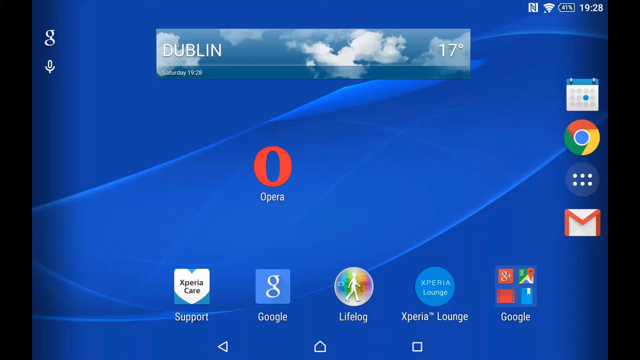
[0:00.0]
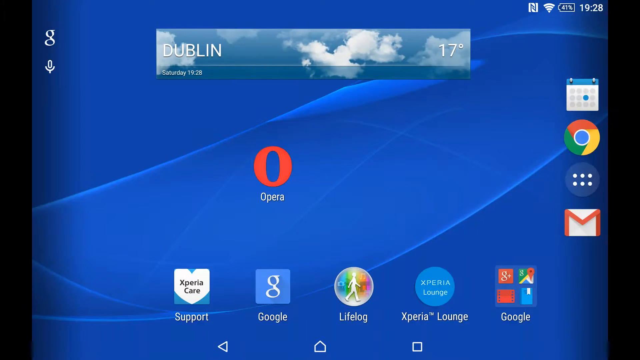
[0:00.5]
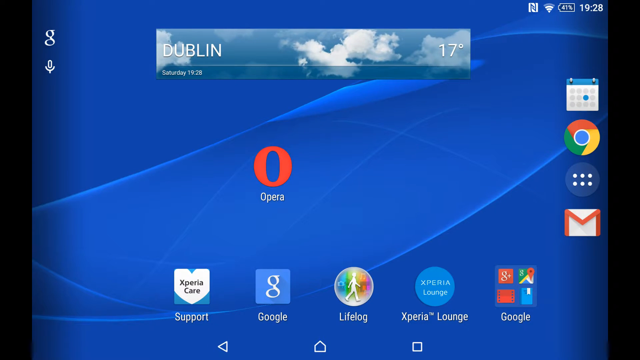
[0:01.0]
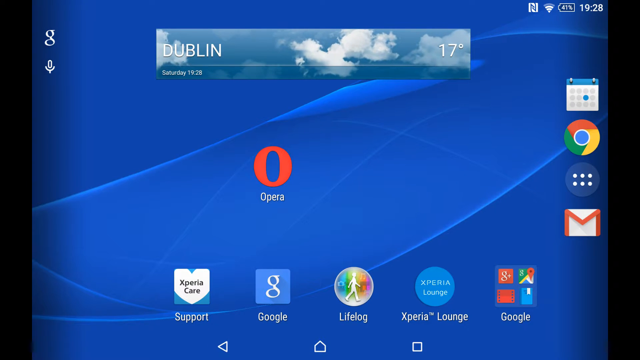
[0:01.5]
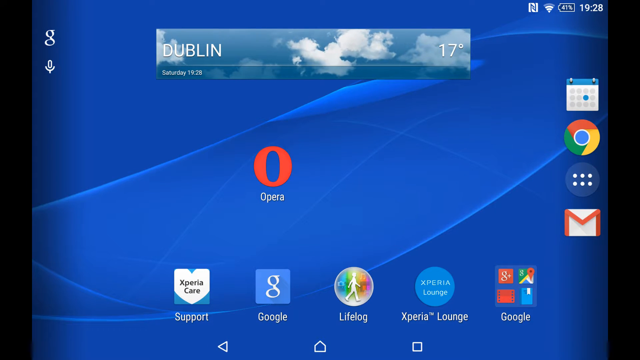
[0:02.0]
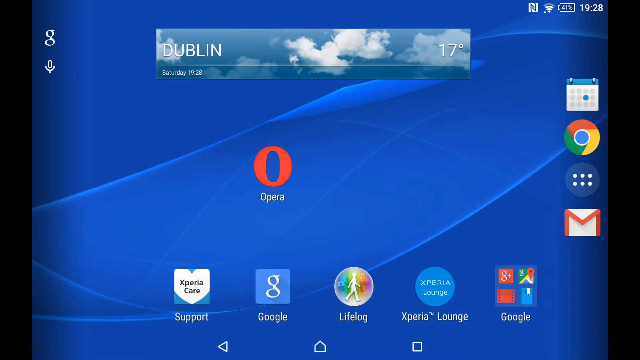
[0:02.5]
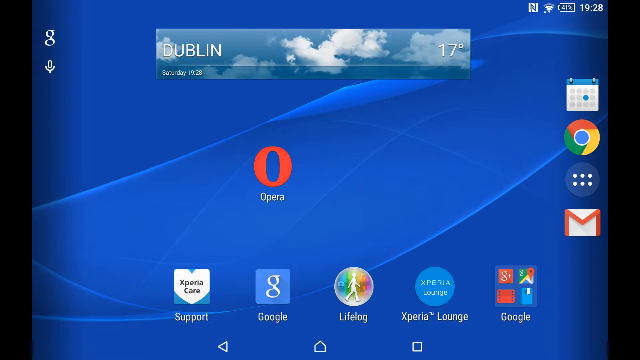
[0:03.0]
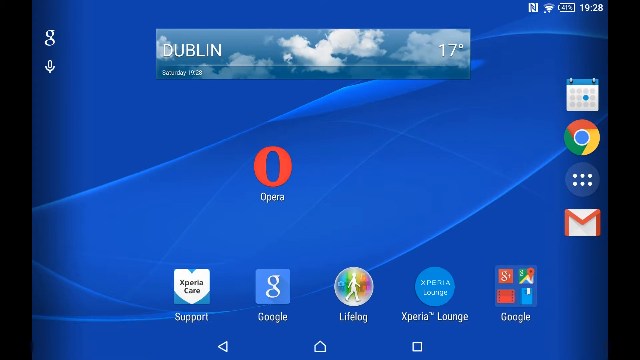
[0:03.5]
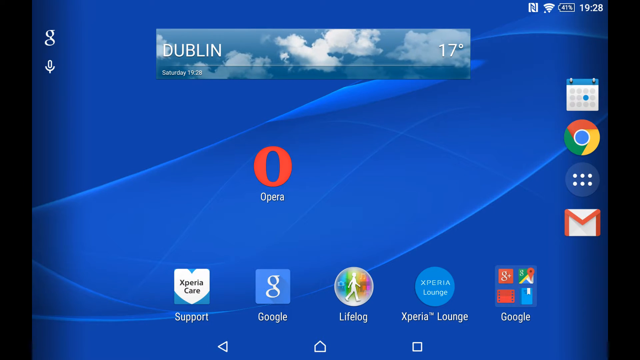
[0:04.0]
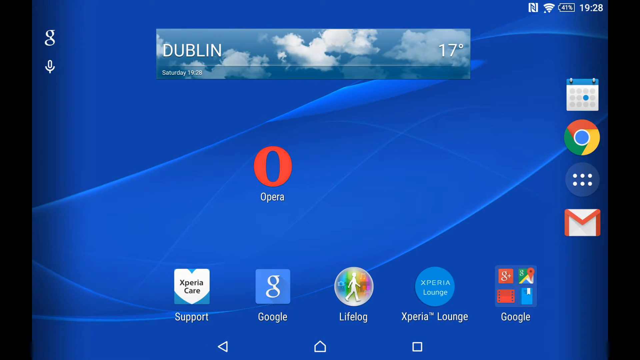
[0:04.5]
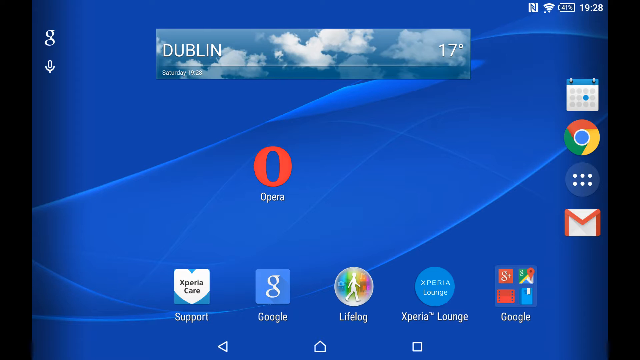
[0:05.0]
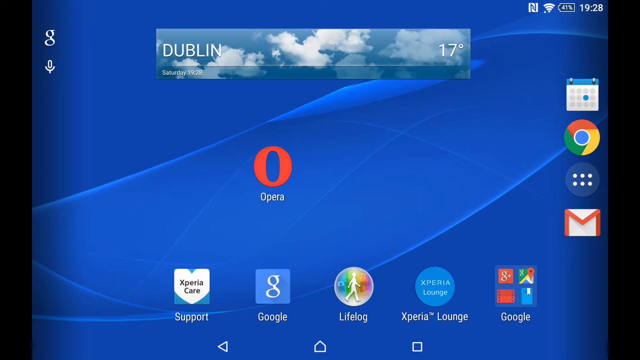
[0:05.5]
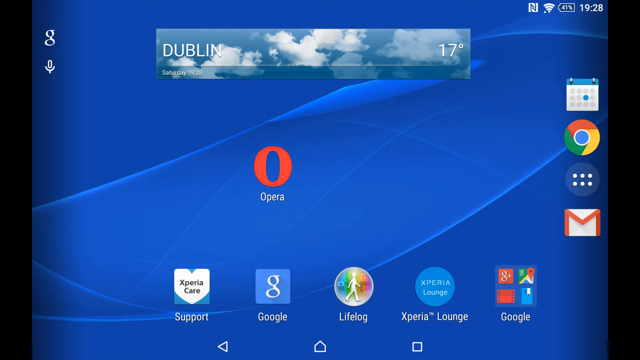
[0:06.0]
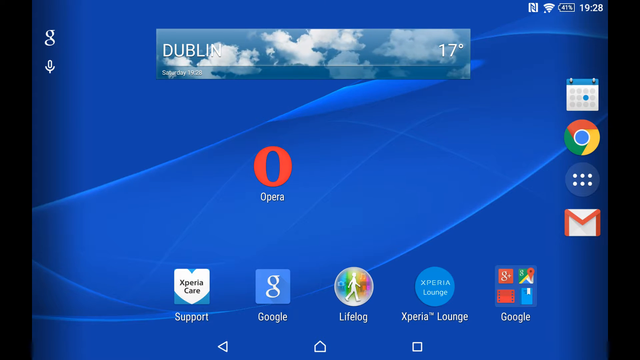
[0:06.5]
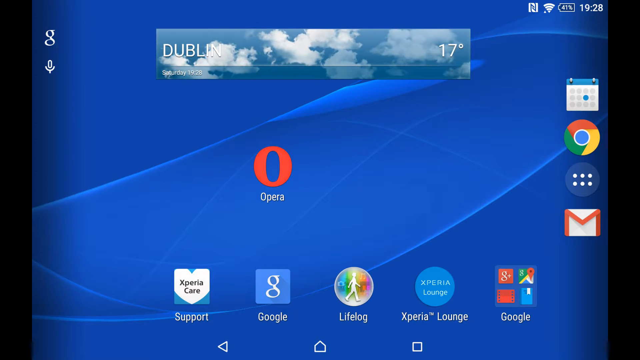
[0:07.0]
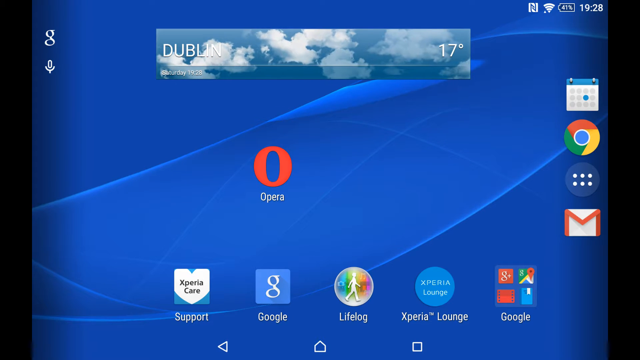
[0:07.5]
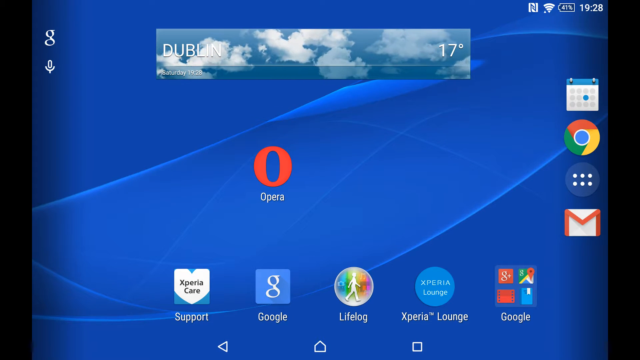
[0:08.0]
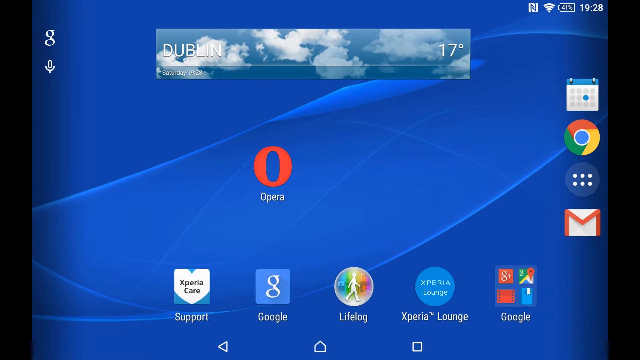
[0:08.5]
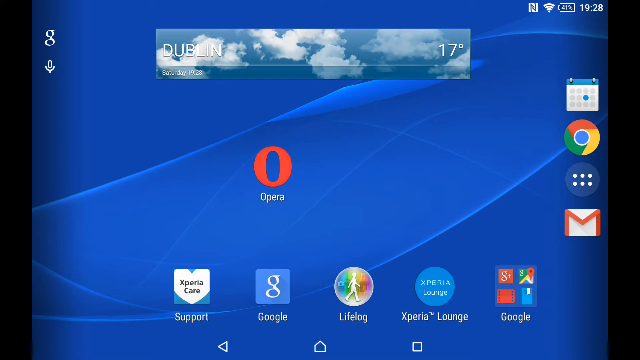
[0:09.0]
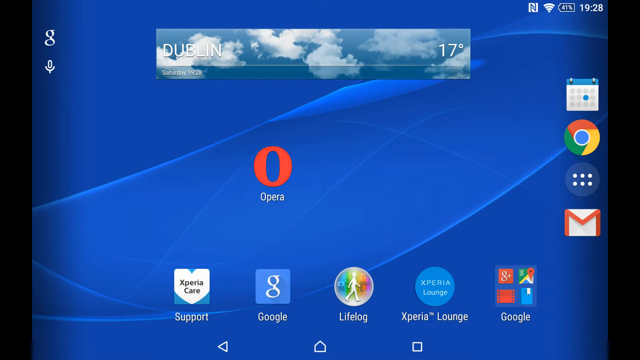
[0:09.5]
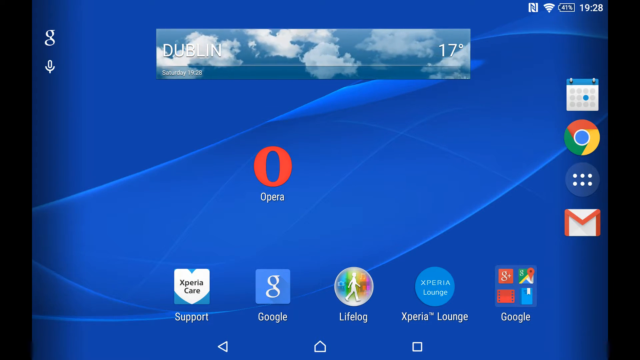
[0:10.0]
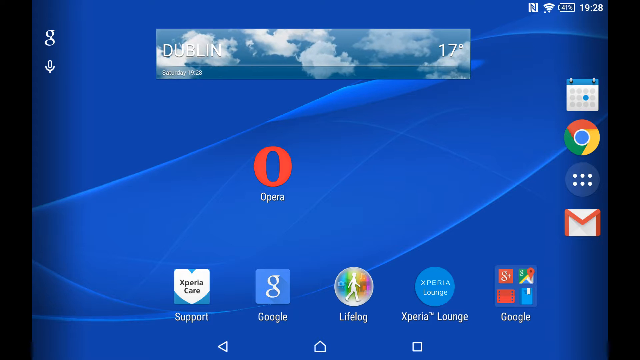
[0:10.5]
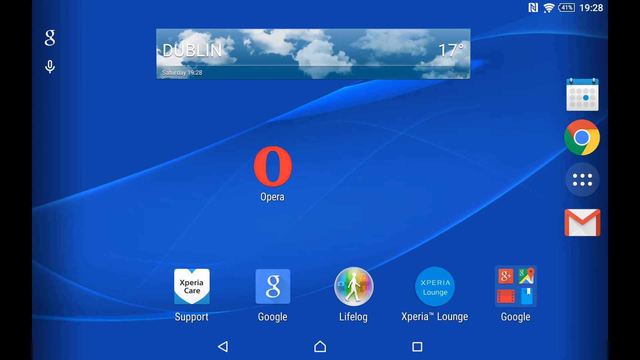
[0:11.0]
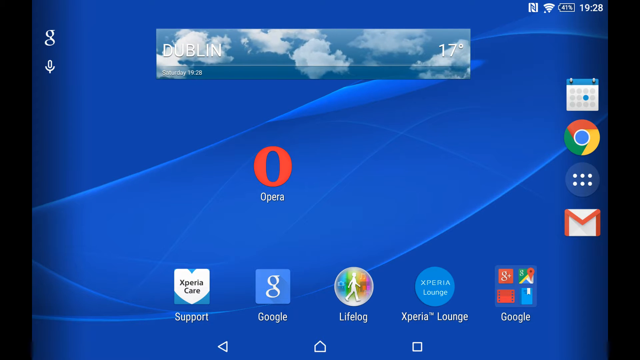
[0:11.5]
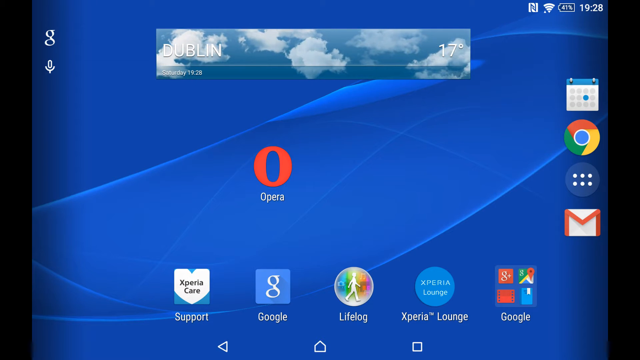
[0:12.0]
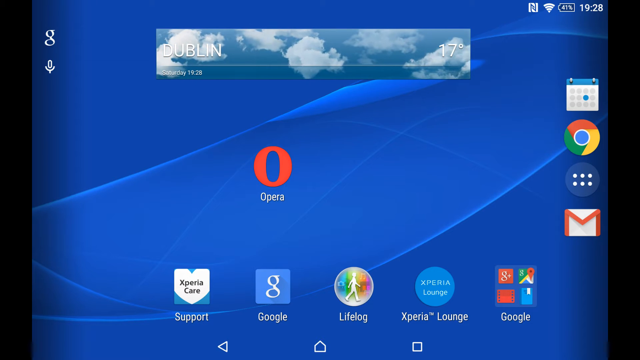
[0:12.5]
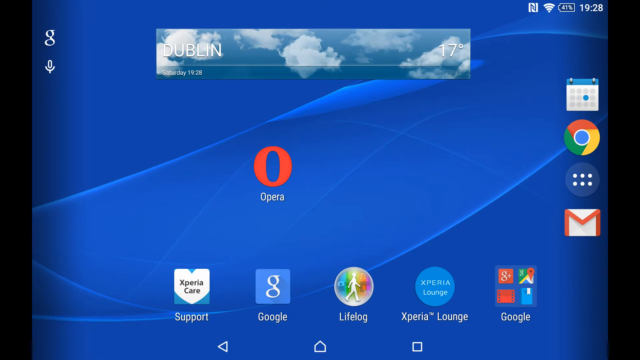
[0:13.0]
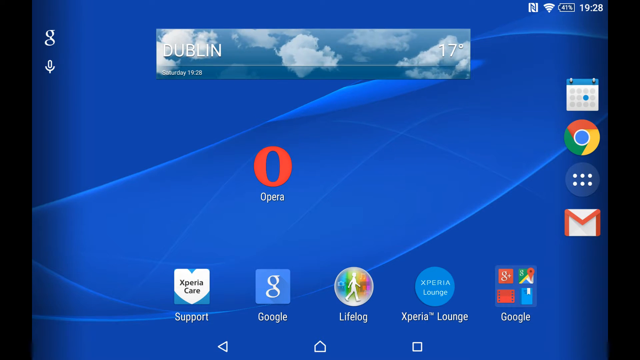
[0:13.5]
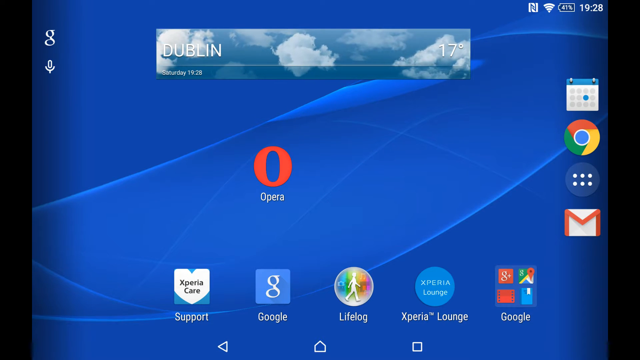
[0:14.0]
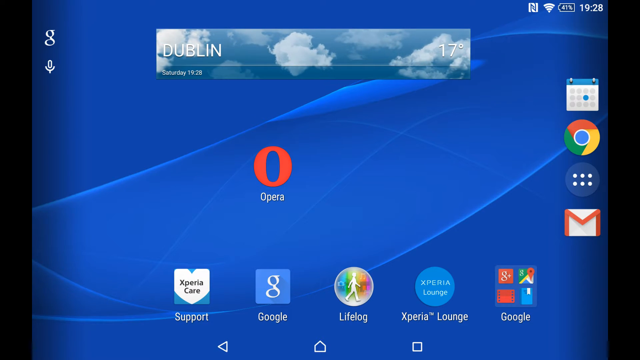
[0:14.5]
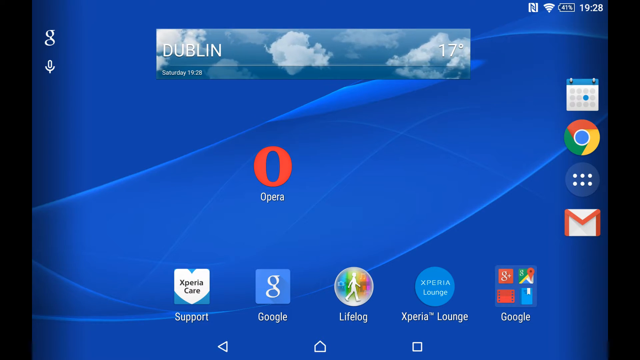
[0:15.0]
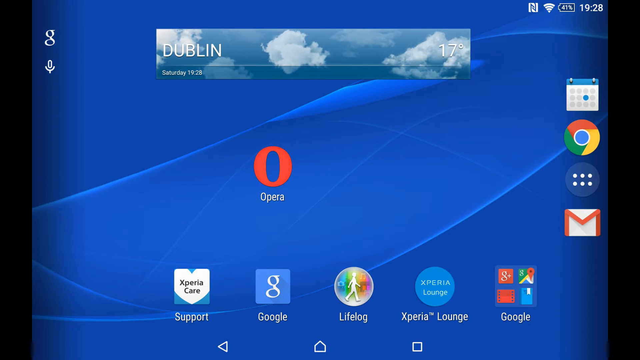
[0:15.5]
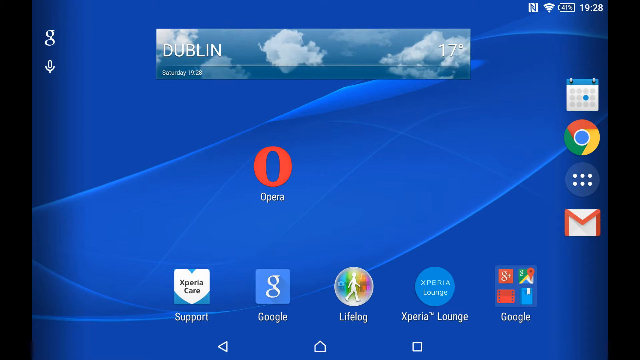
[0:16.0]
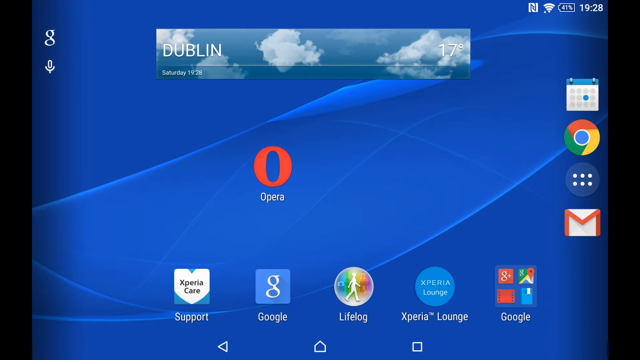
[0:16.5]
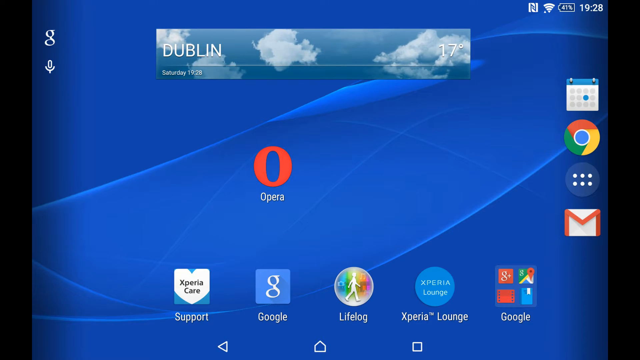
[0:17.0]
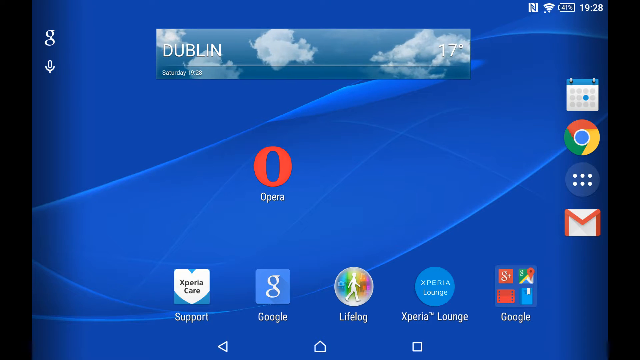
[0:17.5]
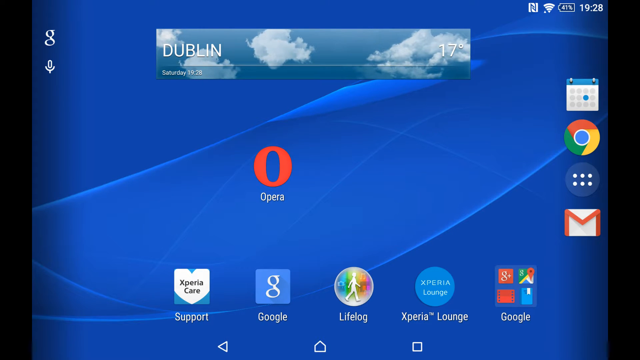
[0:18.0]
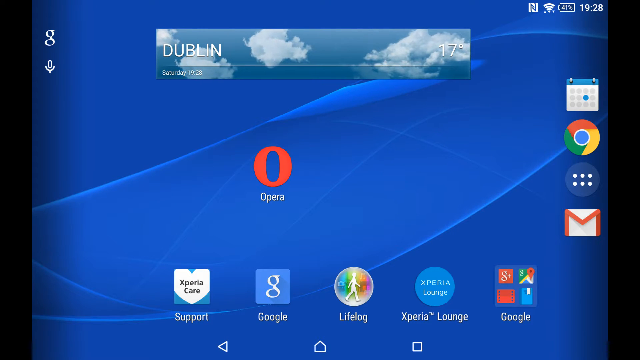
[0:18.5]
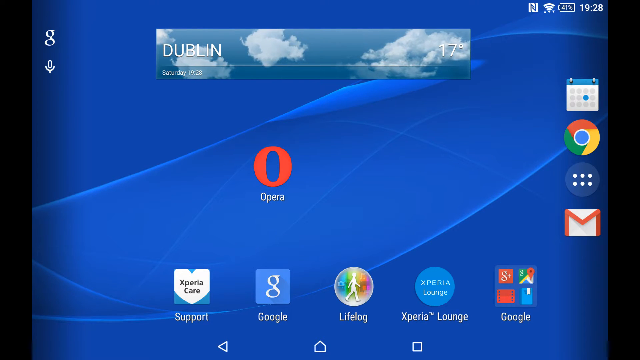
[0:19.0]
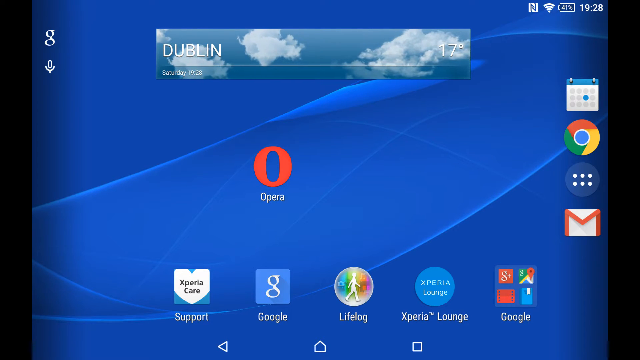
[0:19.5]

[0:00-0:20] What looks like the home page of someone's tablet appears against a blue-black backdrop. A rectangular box shows clouds in the sky, and in the background it says "Dublin." The temperature in Dublin appears to be 17 degrees, with no indication of Celsius or Fahrenheit. It is Saturday and the time is 19:28. At the top, the battery looks to be charged to about 41%, and there is a full Wi-Fi signal. Several apps are on the screen: Google off to the side, a microphone app, a support app, the Google app, Google Chrome, Calendar and Gmail, marking it as an Android device. Xperia Lounge is a blue circle app with white writing. The Gmail app is the traditional white envelope with a red outline. What looks like a more-apps button has six dots inside a blue box and possibly leads to more apps. The Google Chrome logo is the normal one in yellow, red and green with a blue dot inside. The Calendar app is light blue at the top with a white box underneath and a little blue dot. There is a big red app that looks like Opera. The support app is Xperia Care, a white heart inside a blue box with black writing. There also appears to be a LifeLog app, rainbow-colored with a white figure walking. All of this is against the blue backdrop of a blue Android tablet.